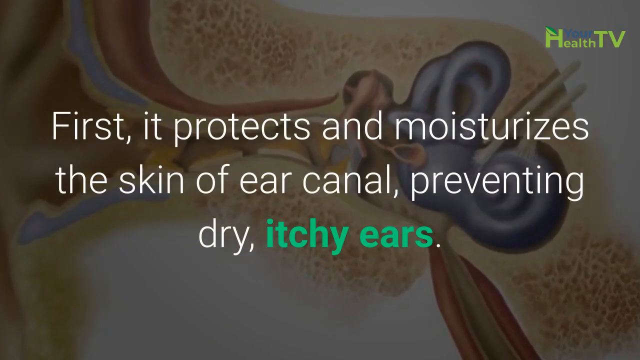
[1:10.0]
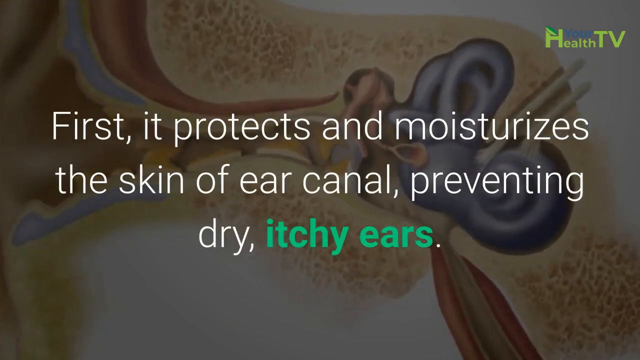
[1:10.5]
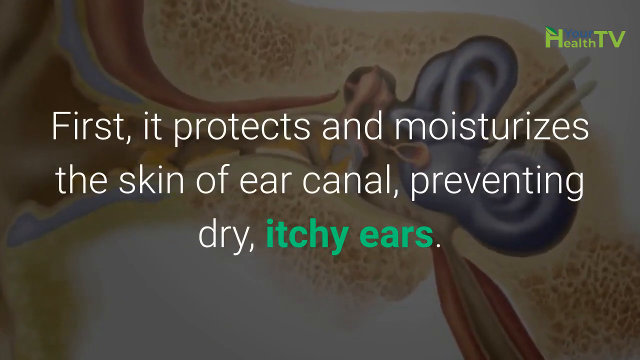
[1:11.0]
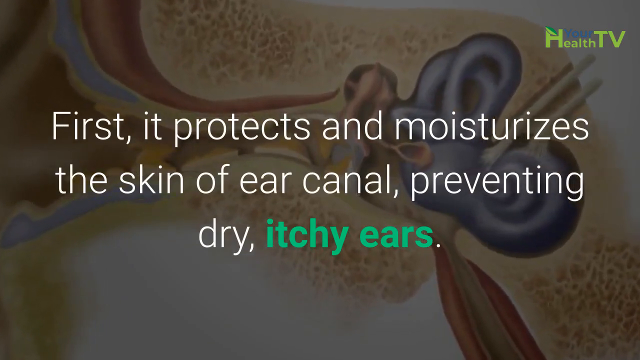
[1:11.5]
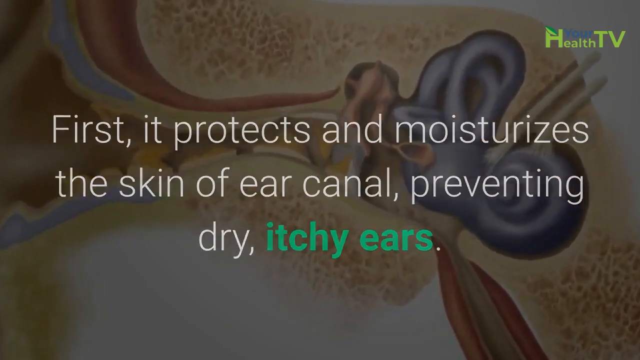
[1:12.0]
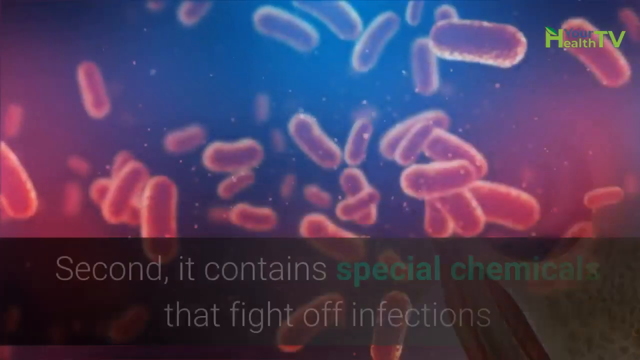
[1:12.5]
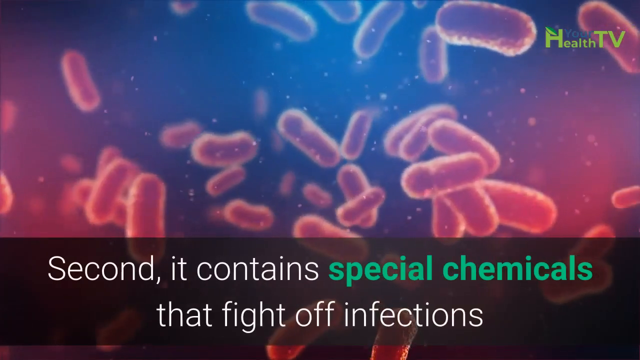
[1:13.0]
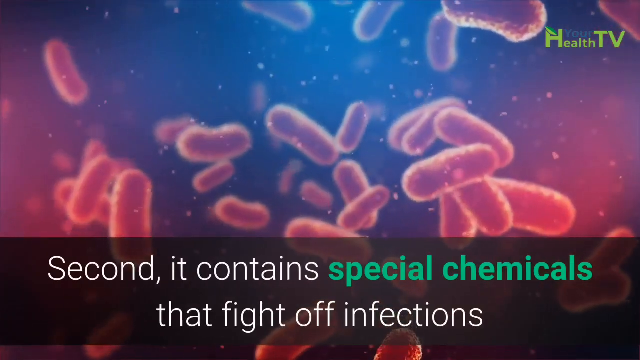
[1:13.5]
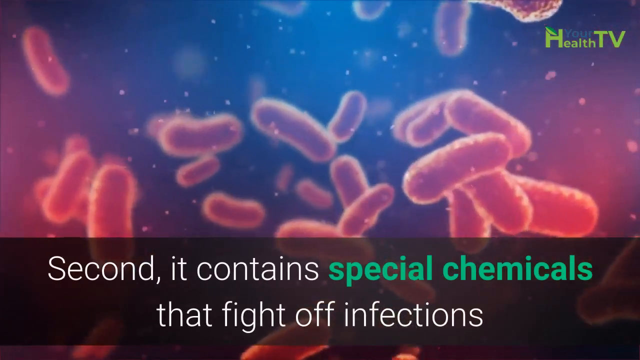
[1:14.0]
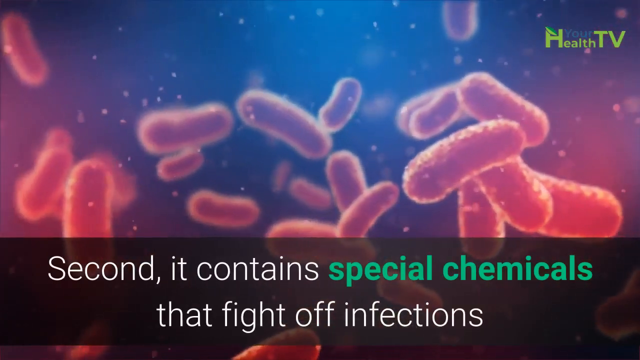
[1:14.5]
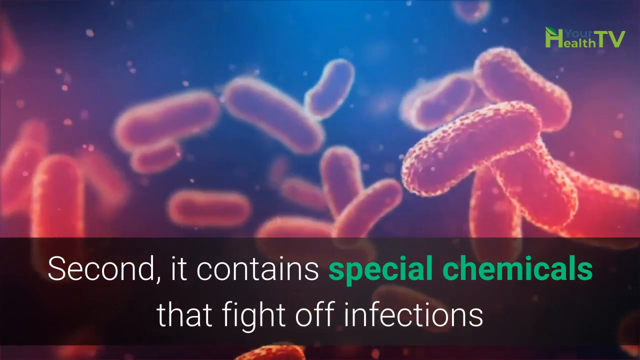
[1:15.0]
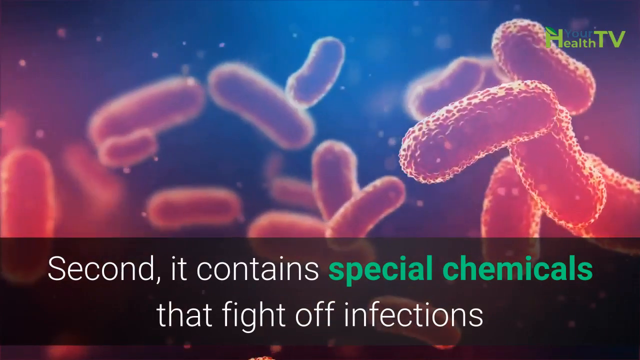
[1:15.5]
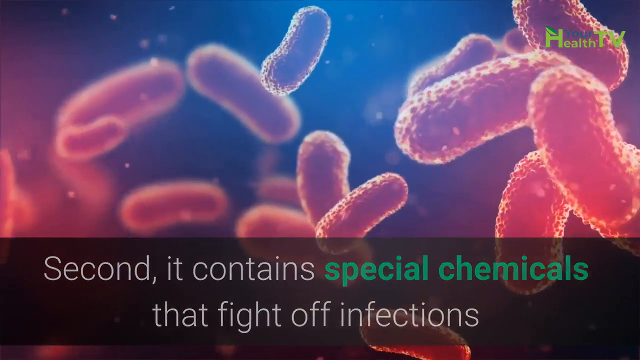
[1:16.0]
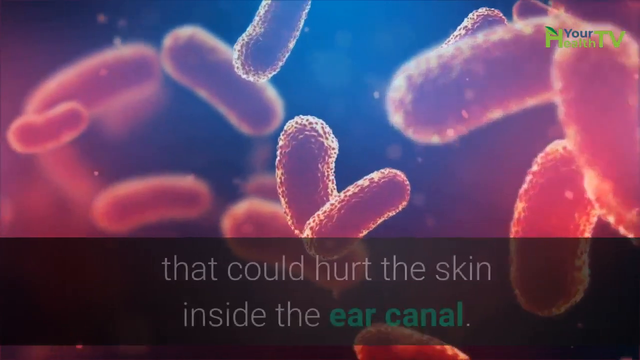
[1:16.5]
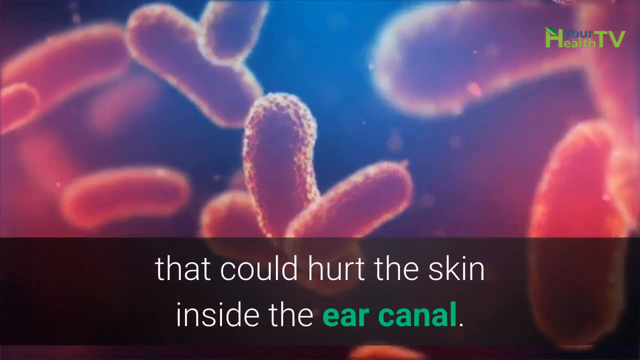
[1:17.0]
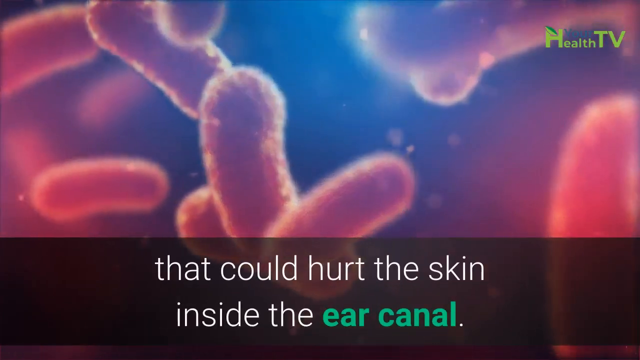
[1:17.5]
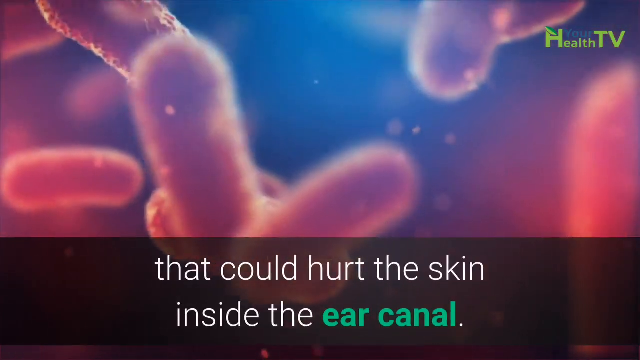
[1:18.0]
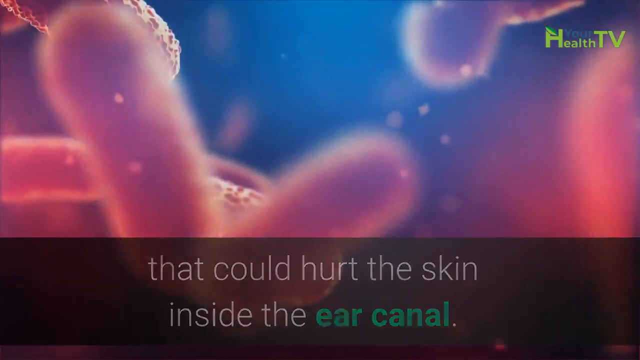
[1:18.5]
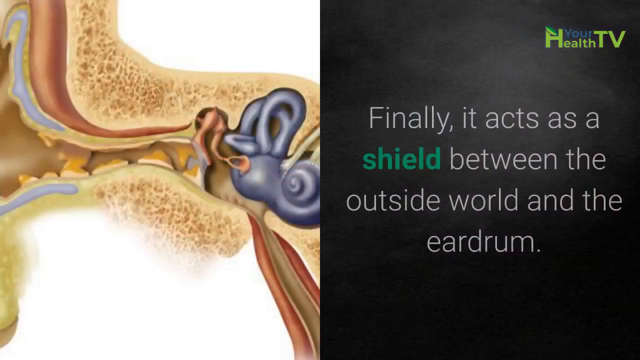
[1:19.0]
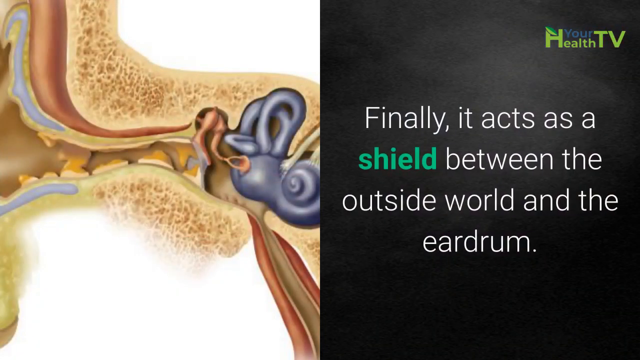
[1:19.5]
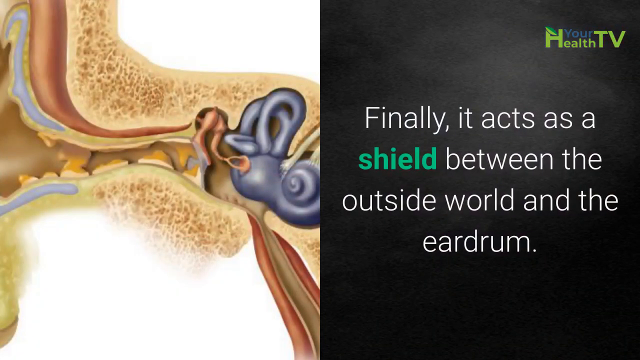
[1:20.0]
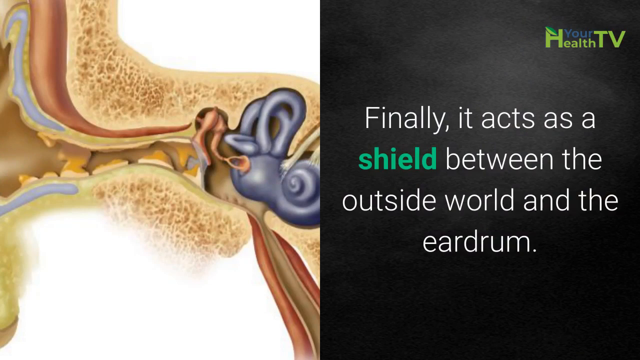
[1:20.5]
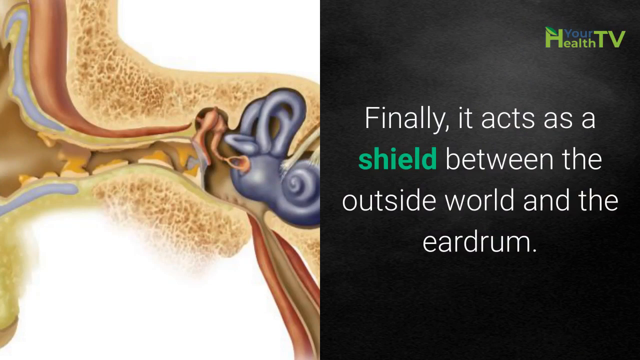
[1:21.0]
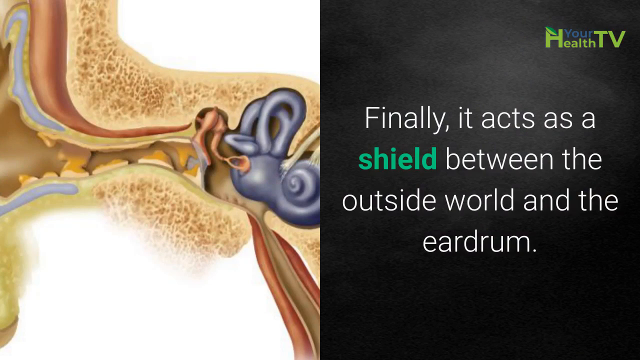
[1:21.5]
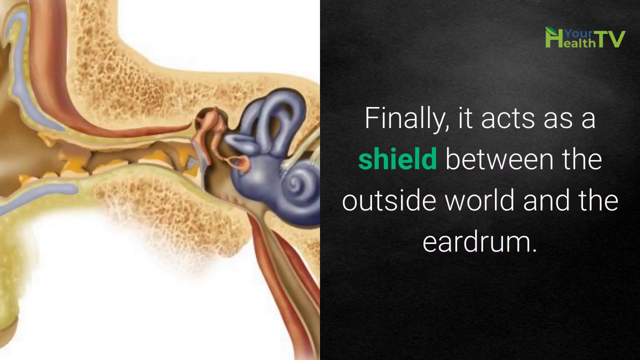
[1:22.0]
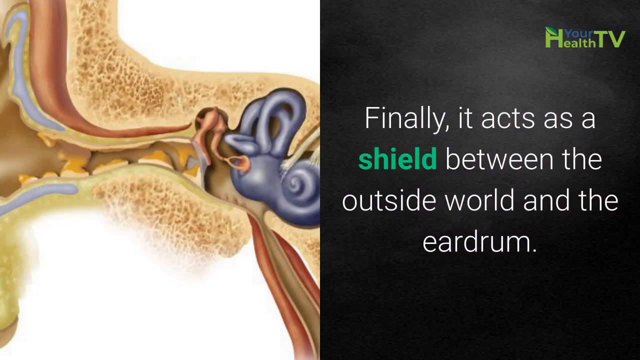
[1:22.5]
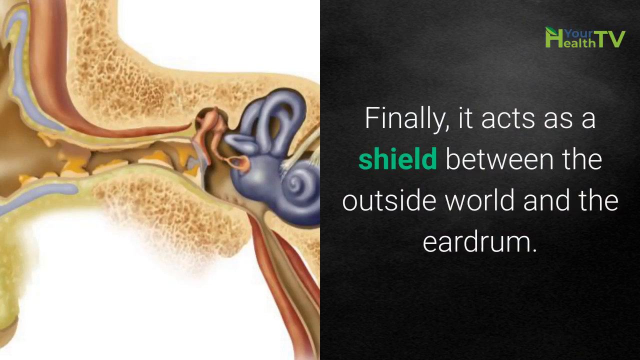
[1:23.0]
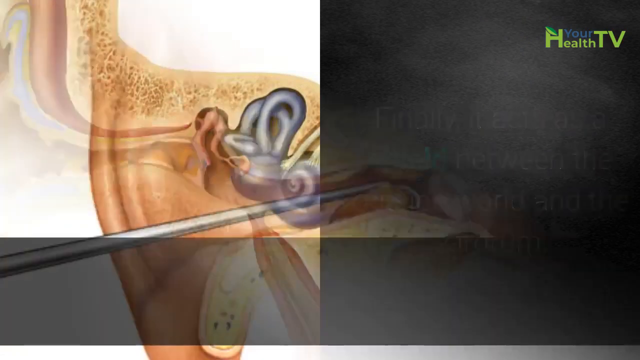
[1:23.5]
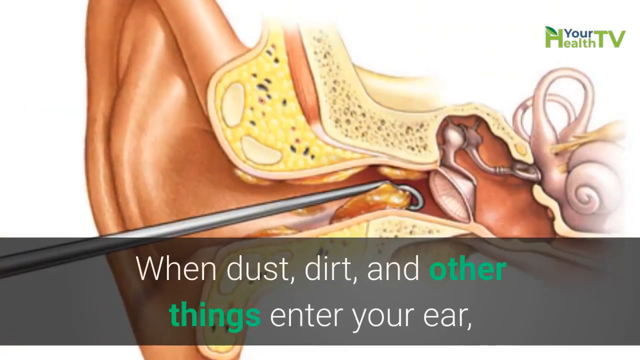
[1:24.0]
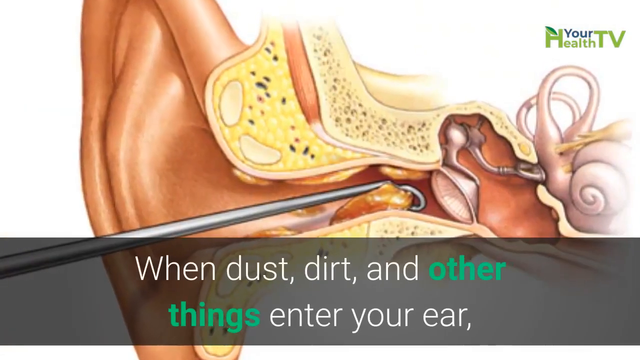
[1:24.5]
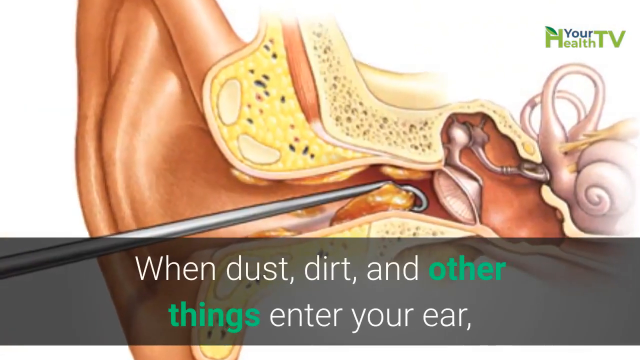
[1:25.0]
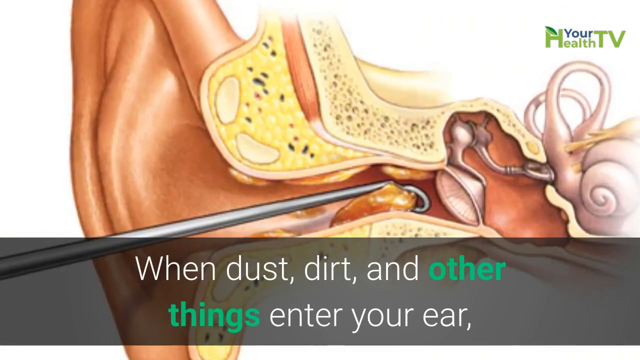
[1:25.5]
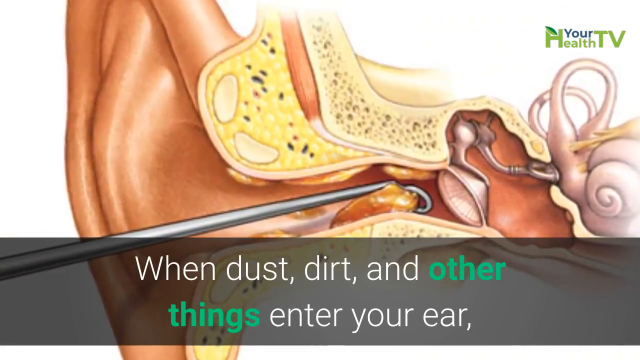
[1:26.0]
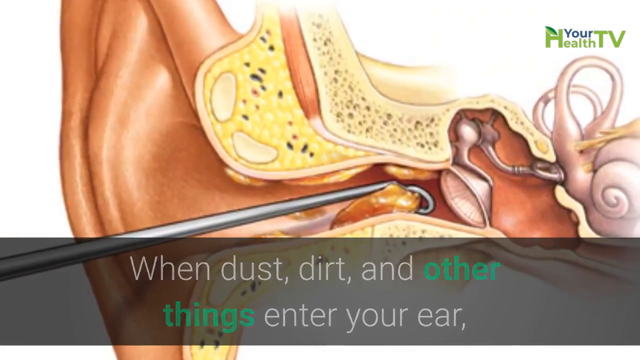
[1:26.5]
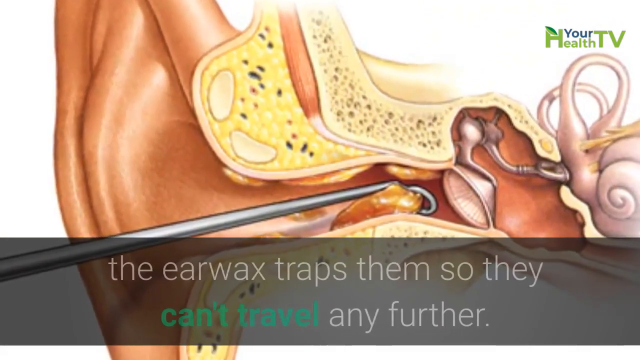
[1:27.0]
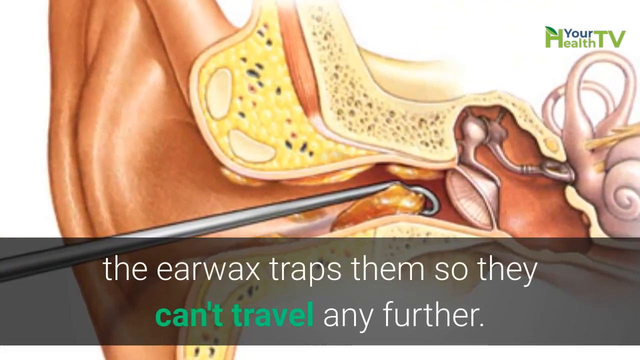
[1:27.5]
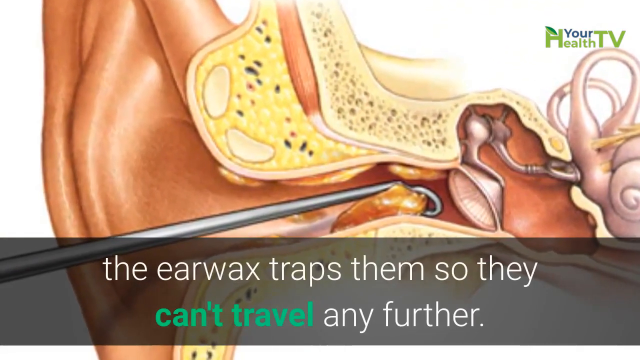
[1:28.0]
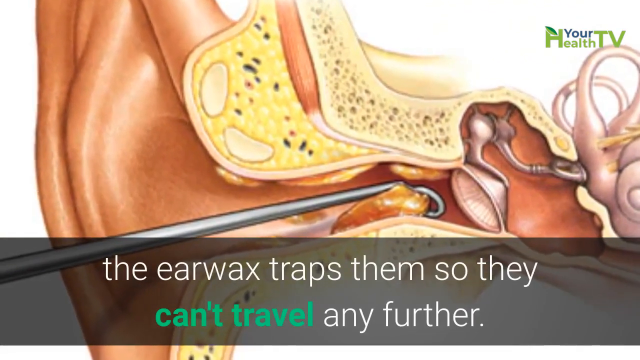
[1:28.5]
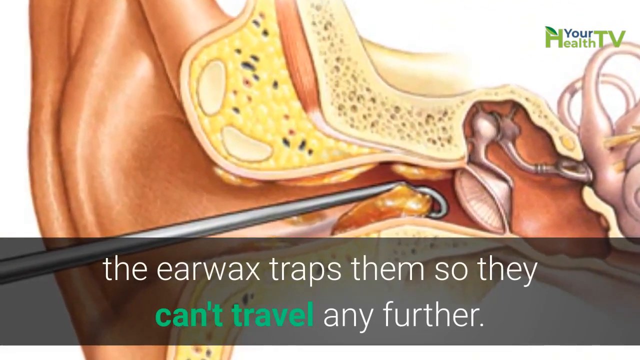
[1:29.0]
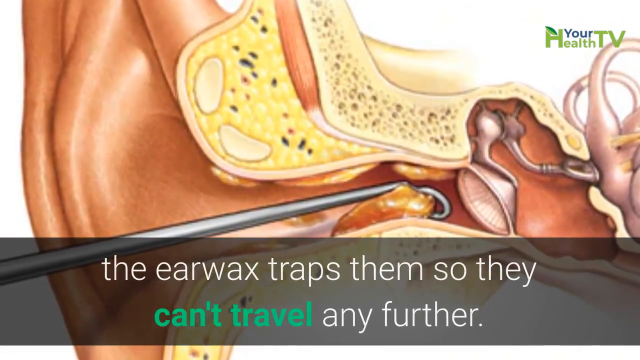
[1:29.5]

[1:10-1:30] The same color-coded cross-section diagram of an ear appears. Then an unidentified image shows red and purple tic-tac-shaped cells floating in space, almost like three-dimensional confetti; they possibly represent debris, germs or chemicals. Text reads "second, it contains special chemicals that fight off infections that could hurt the skin inside of the ear canal." The same cross-section diagram of the ear returns with the text "finally, it acts as a shield between the outside world and the ear drum."